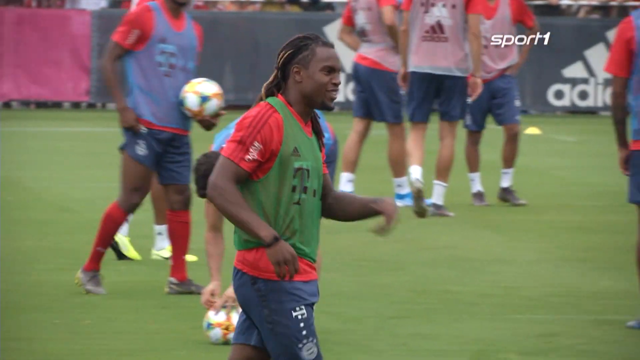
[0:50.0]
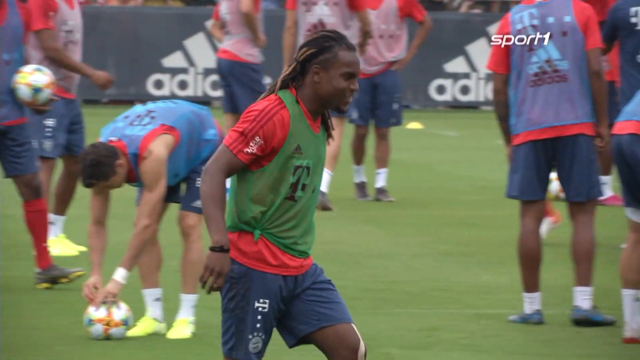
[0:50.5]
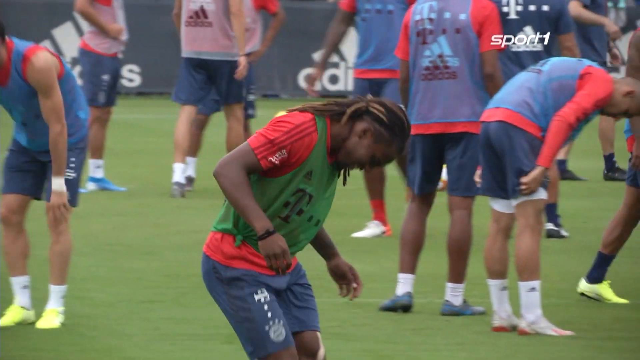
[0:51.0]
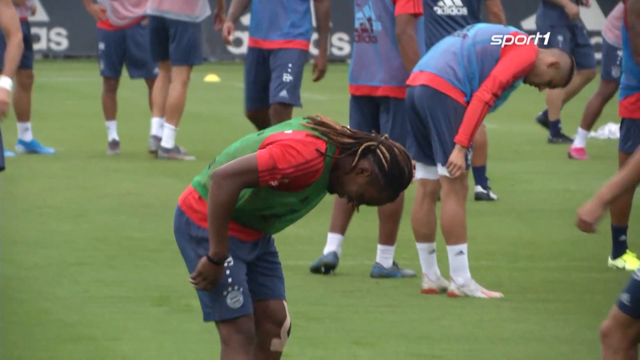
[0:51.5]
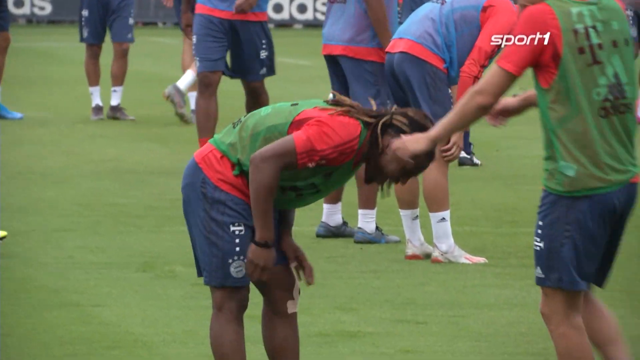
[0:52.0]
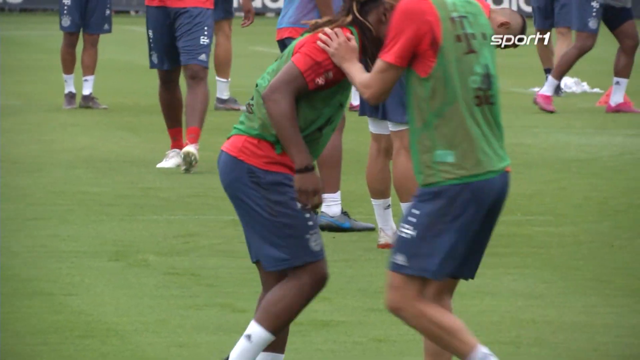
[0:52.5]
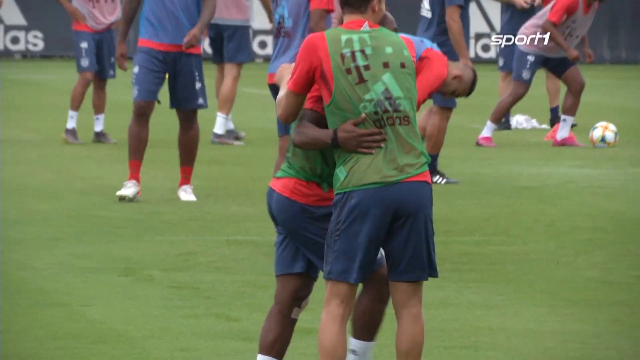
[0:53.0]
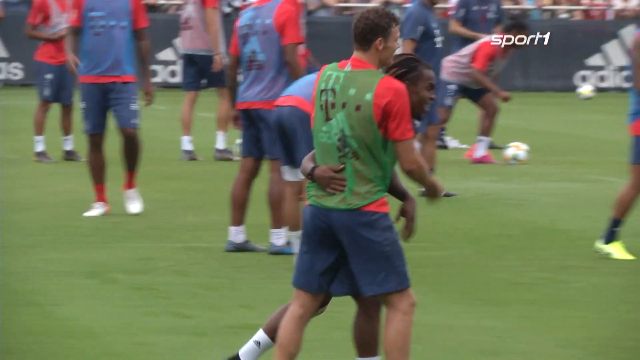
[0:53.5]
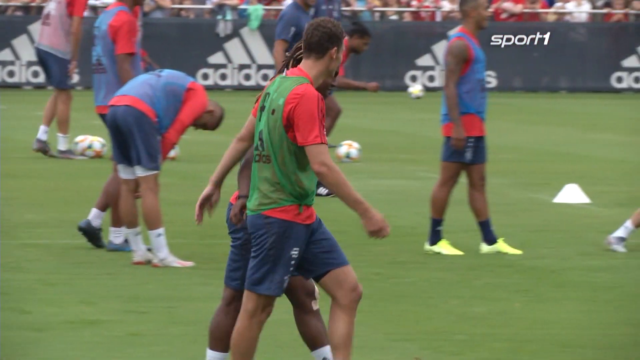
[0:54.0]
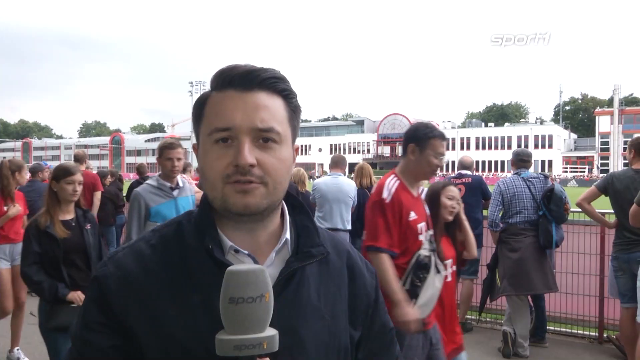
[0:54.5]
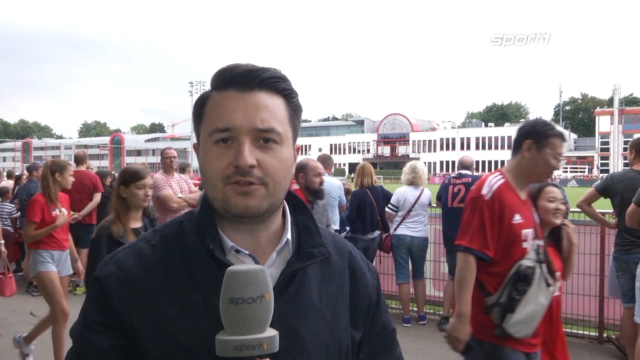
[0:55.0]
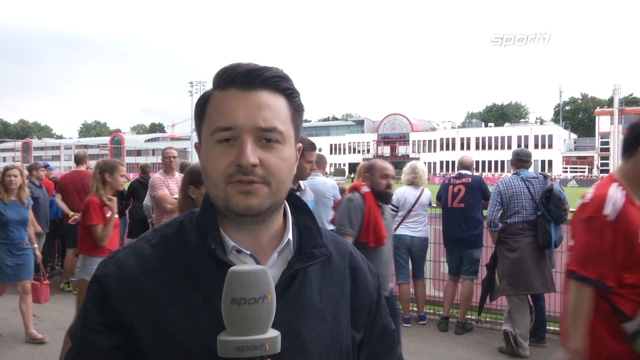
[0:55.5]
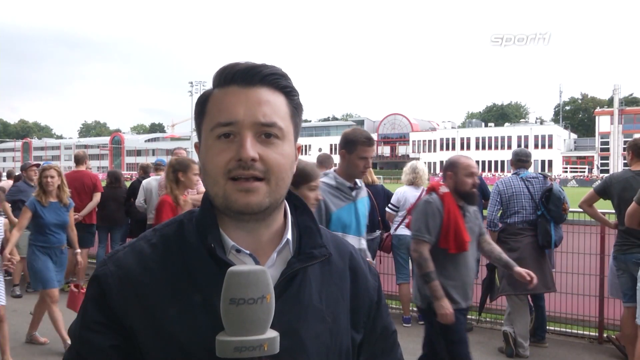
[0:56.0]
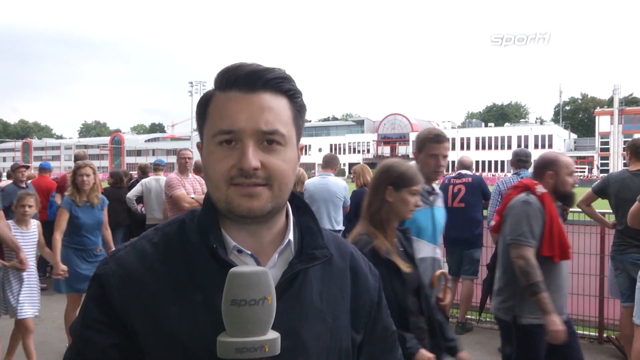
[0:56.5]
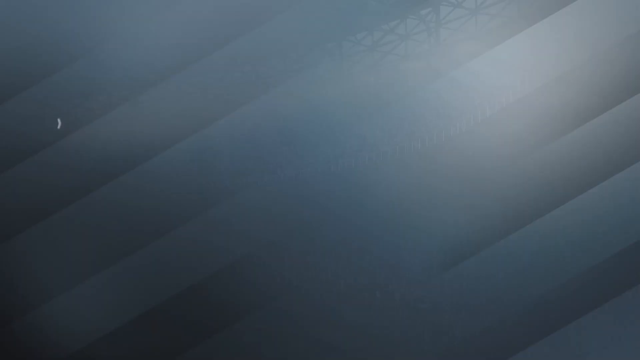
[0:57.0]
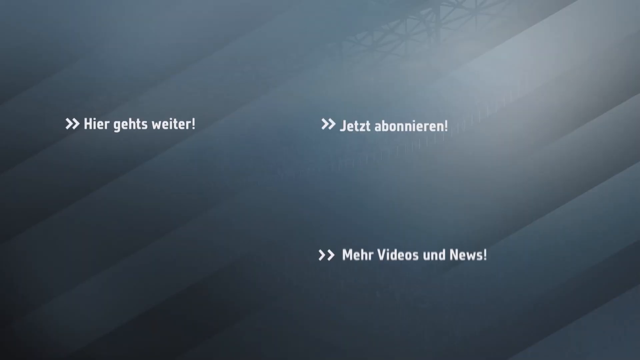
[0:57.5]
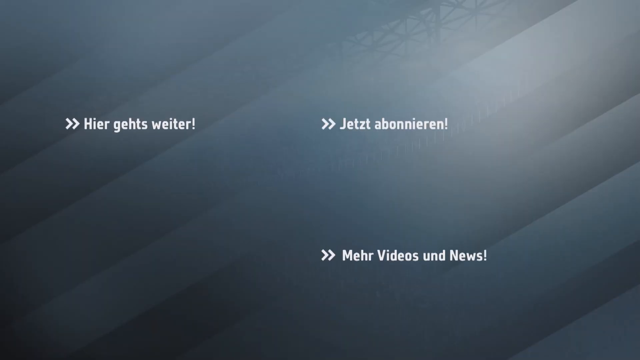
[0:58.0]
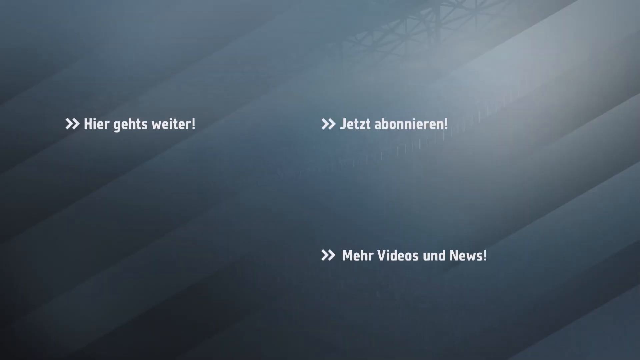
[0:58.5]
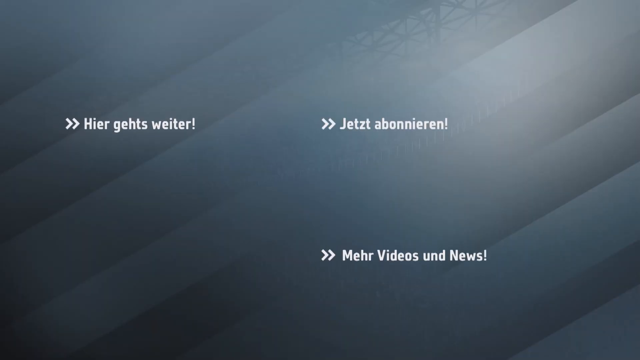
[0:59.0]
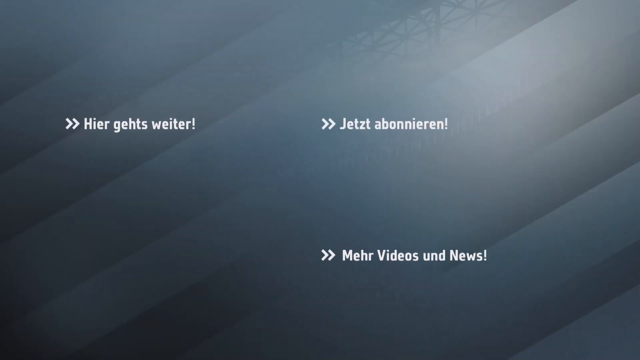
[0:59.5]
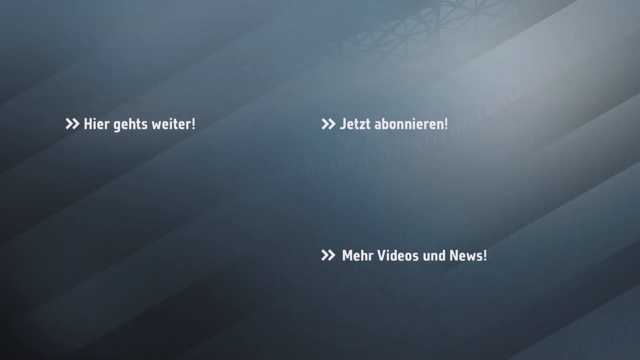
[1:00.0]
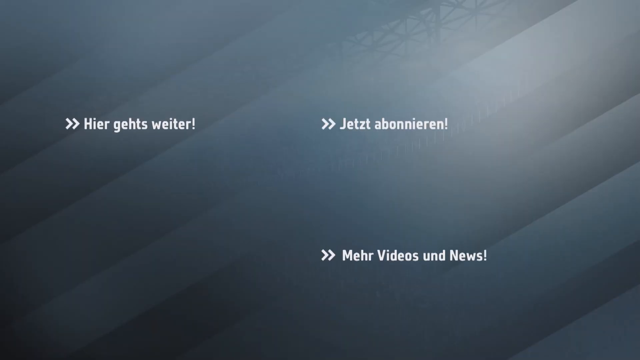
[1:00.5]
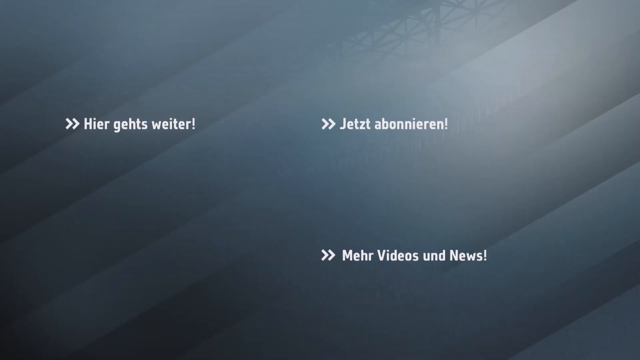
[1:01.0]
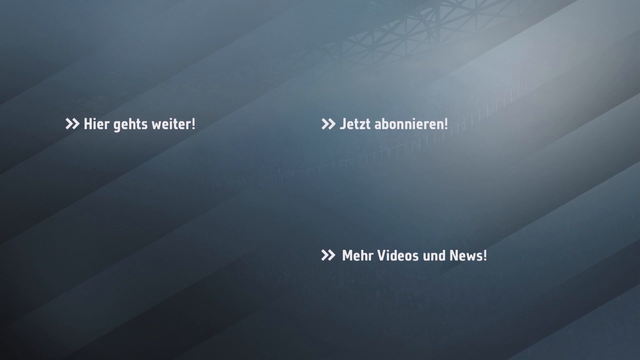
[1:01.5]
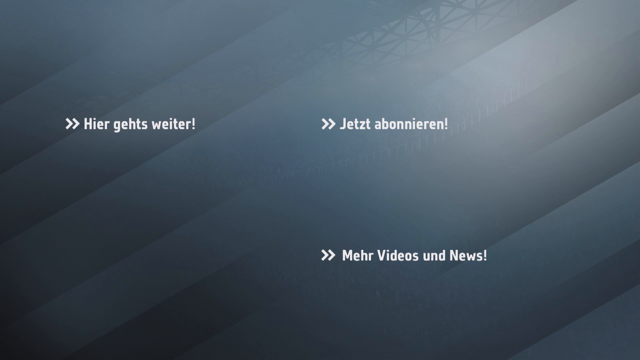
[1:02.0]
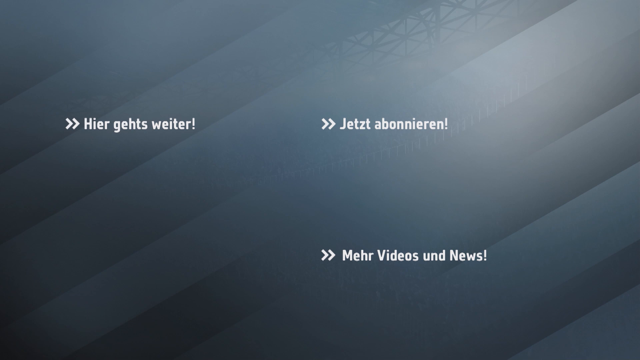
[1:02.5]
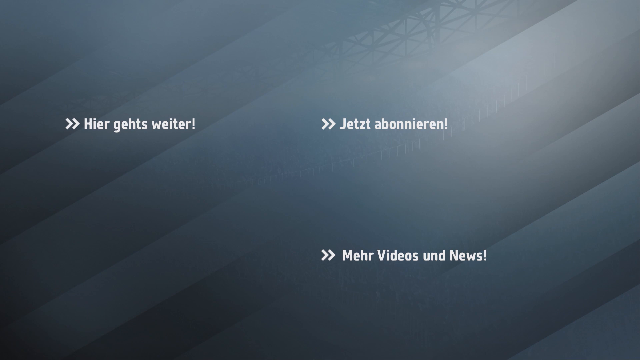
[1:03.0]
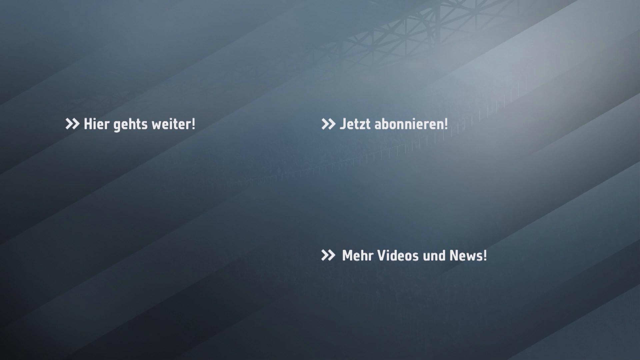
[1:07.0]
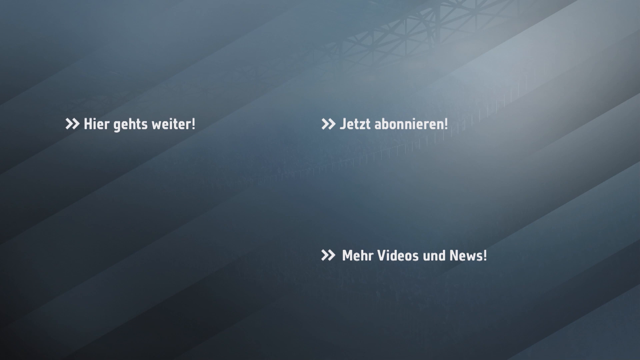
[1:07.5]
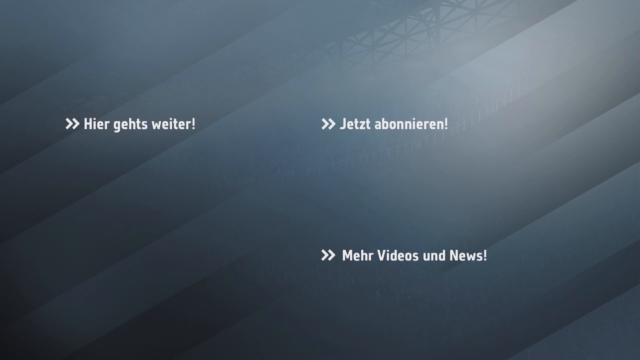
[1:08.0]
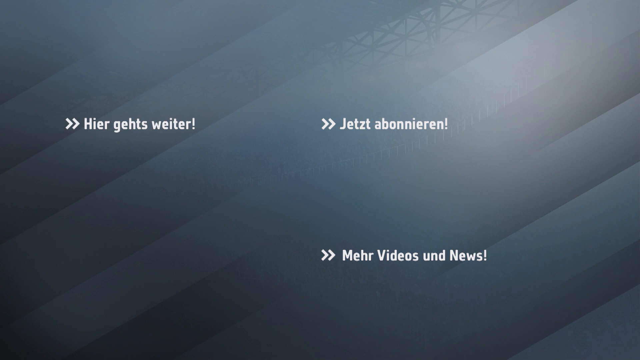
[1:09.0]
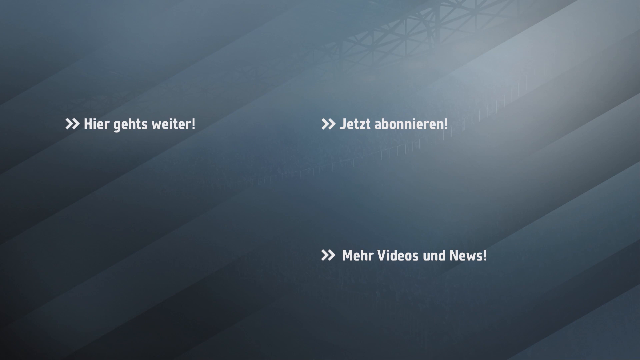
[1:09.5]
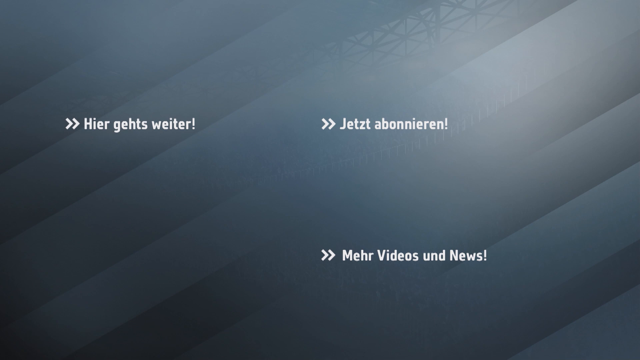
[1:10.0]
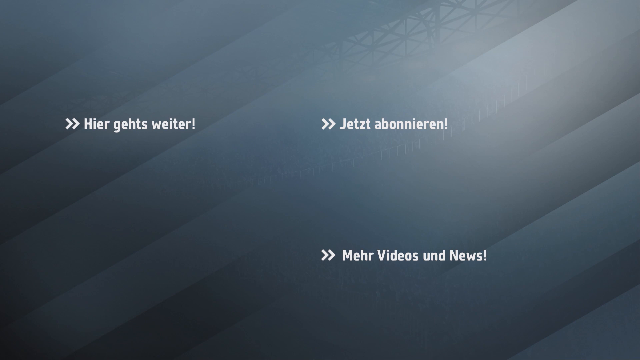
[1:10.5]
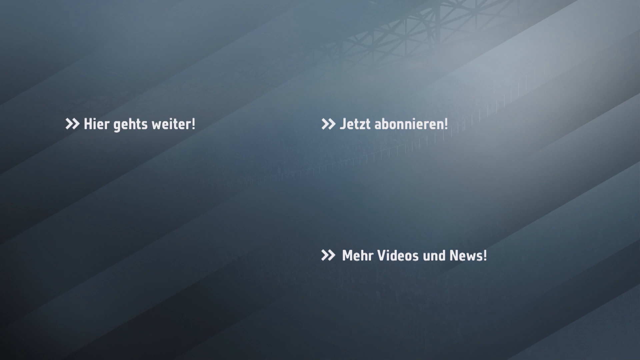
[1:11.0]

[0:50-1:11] The injured player walks around and bends over. A teammate comes over, and the player puts his right arm around the teammate's back and appears to give him a hug. A gray screen with German text appears. The video then shows the players doing the drills again, trapping the ball, passing and stretching, apparently a recap of a training camp. Stefan Kumberger reports again while fans watch. It looks to be cool out, not very hot. Sponsors T-Mobile, Alliance and Adidas are visible, with Alliance on a white sign in blue. The ref, who seems to be the coach, is shown. Players run with pennies, and in a slide tackle three players go down; the player gets injured, gets up and limps. Another man goes up to him, and he smiles and laughs. The reporter talks as people walk behind him. Then a black-gray box with German words about videos and news appears.